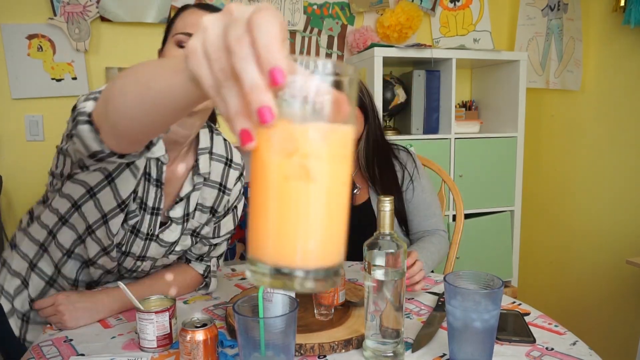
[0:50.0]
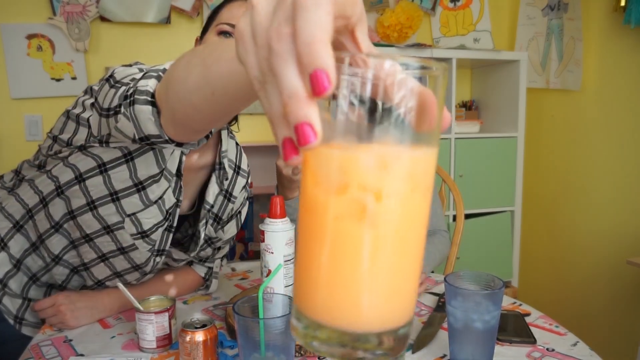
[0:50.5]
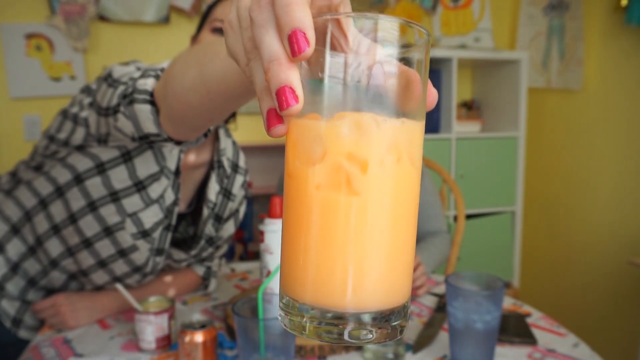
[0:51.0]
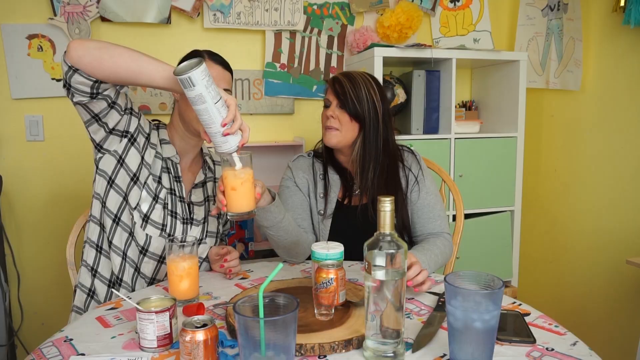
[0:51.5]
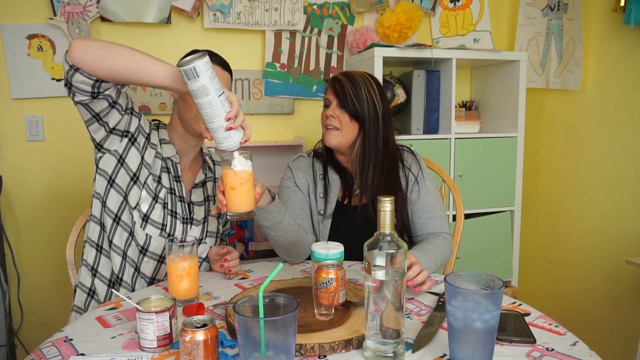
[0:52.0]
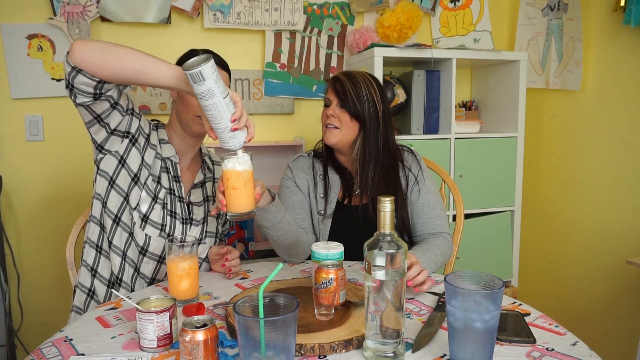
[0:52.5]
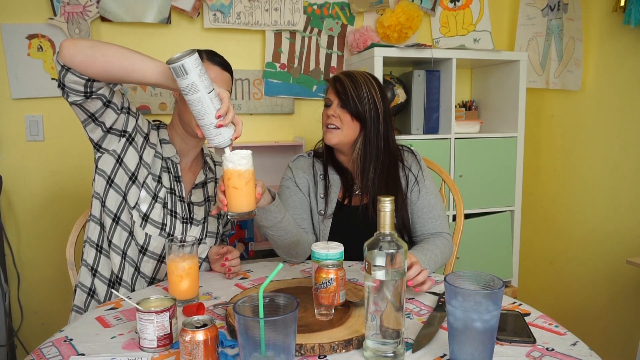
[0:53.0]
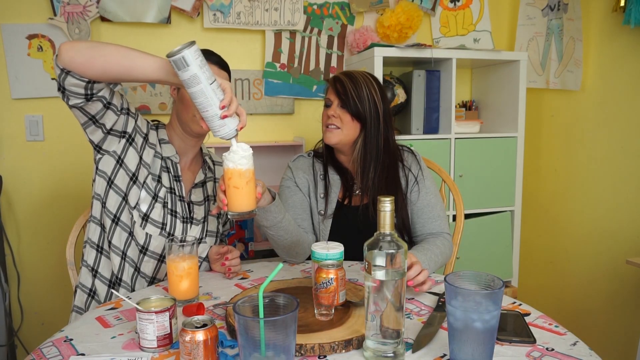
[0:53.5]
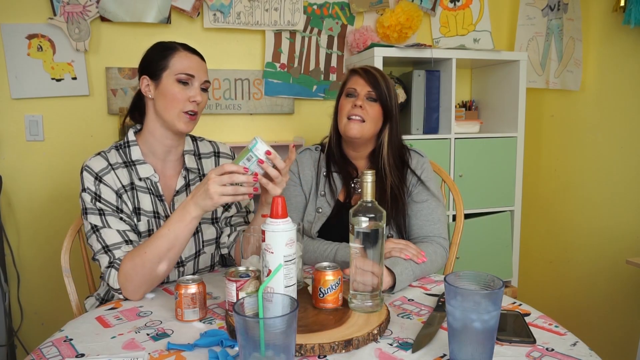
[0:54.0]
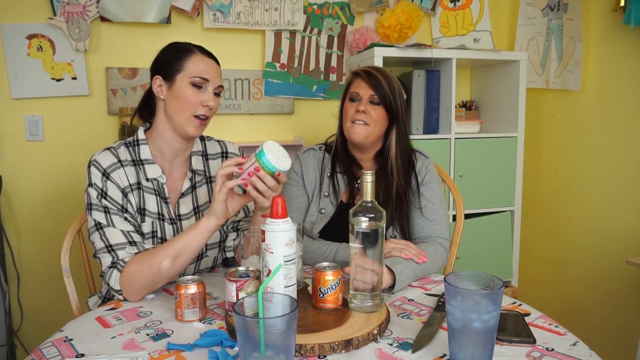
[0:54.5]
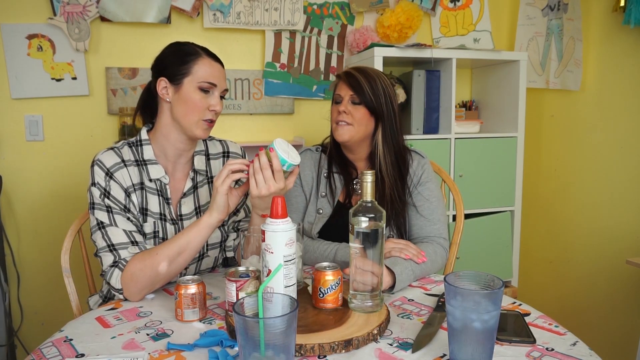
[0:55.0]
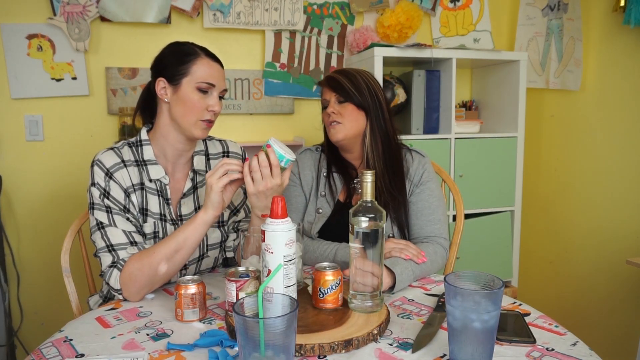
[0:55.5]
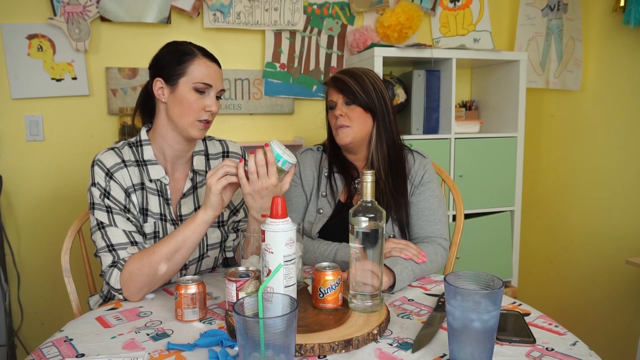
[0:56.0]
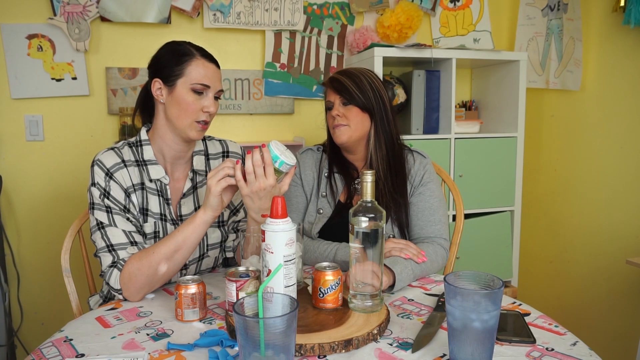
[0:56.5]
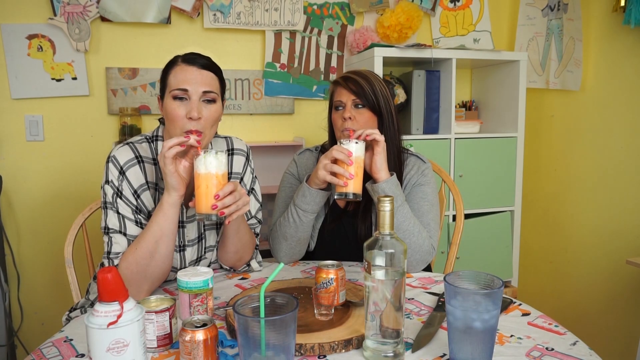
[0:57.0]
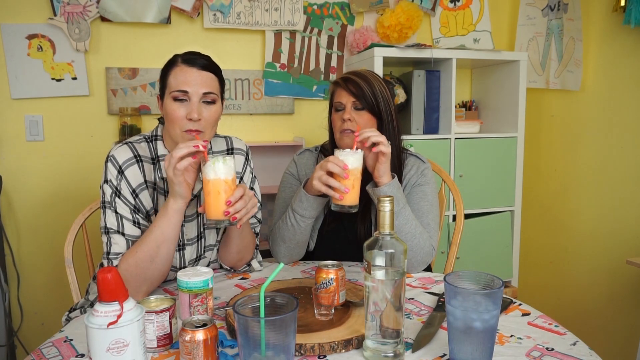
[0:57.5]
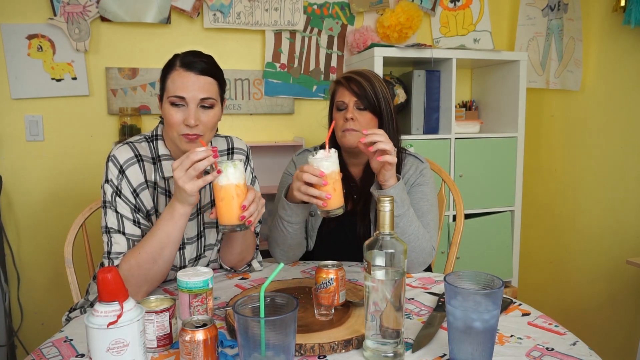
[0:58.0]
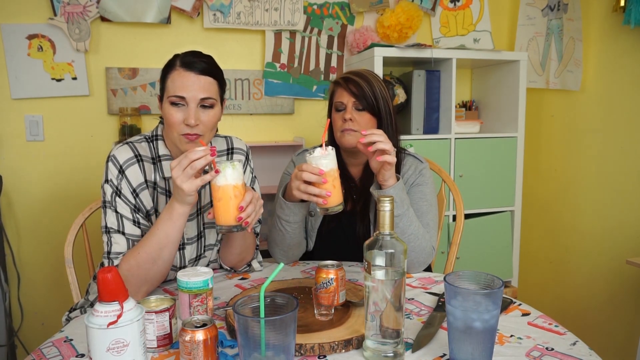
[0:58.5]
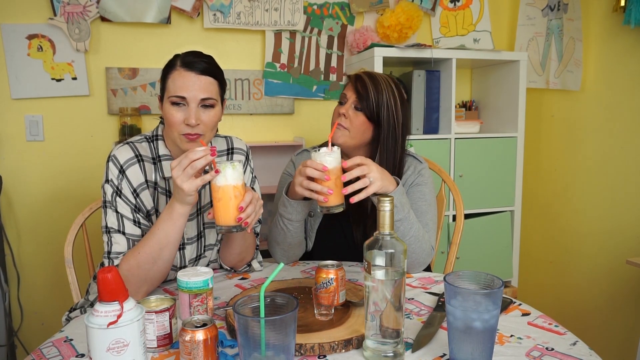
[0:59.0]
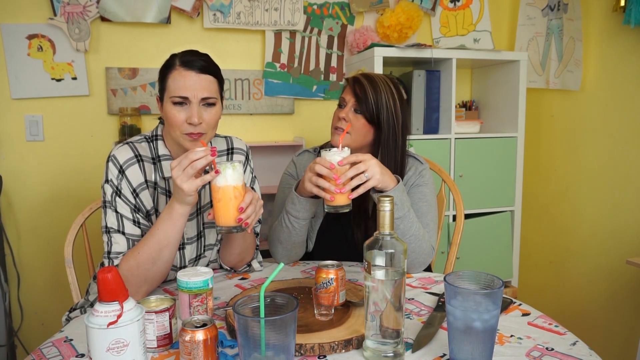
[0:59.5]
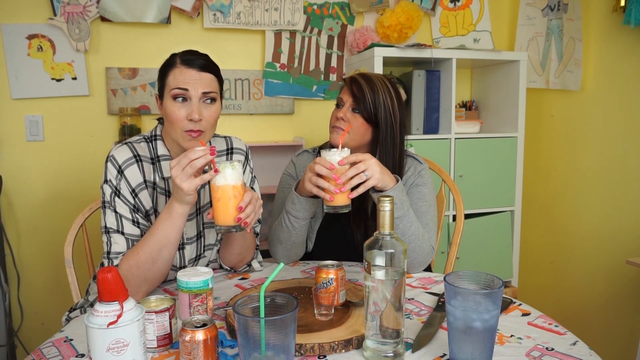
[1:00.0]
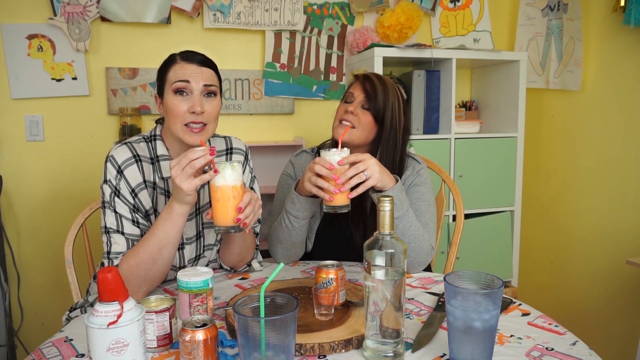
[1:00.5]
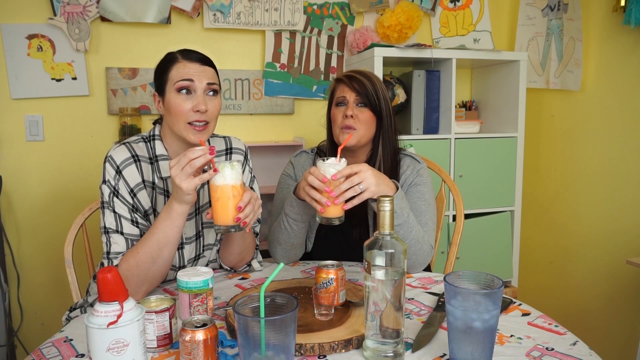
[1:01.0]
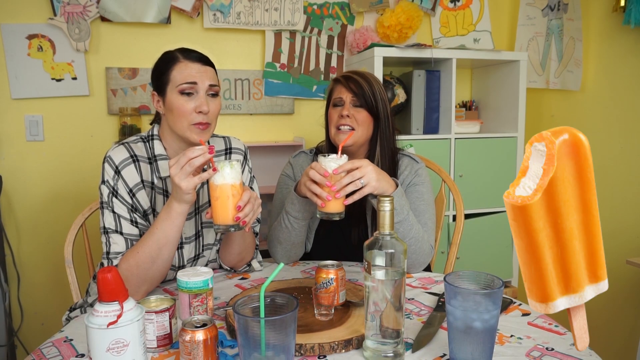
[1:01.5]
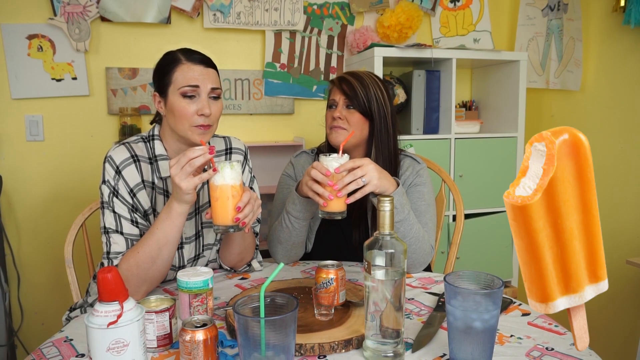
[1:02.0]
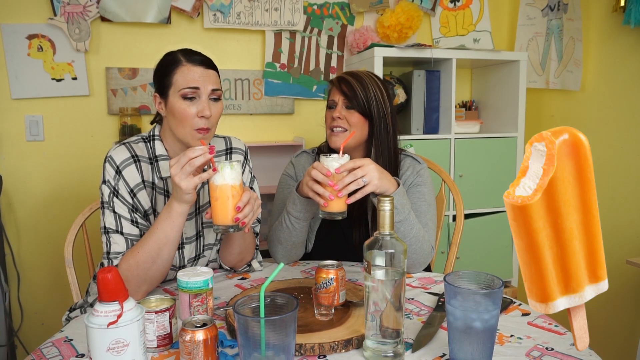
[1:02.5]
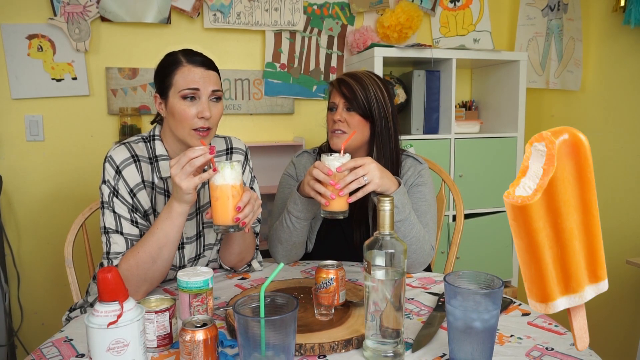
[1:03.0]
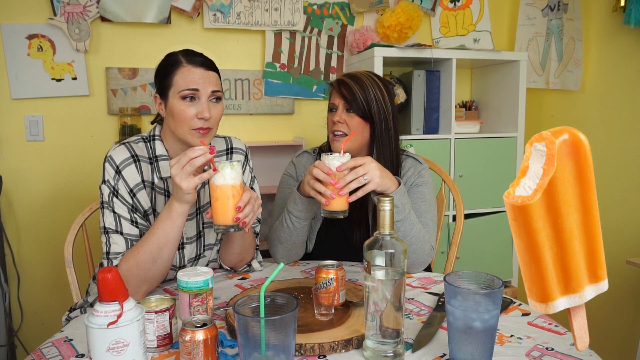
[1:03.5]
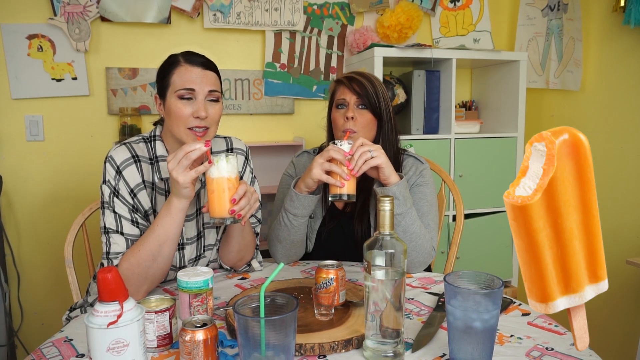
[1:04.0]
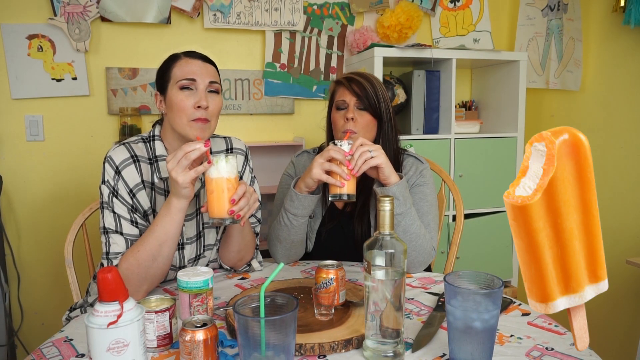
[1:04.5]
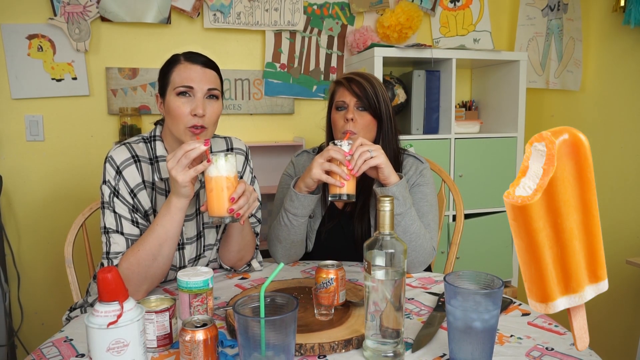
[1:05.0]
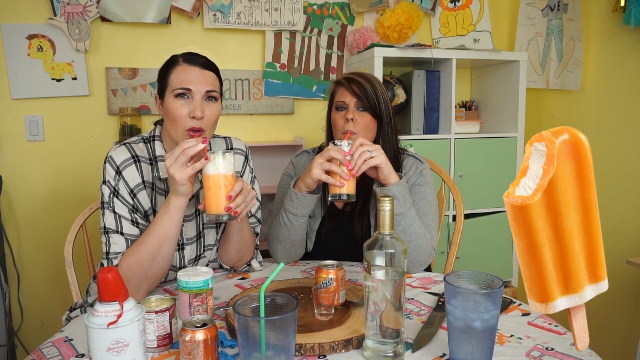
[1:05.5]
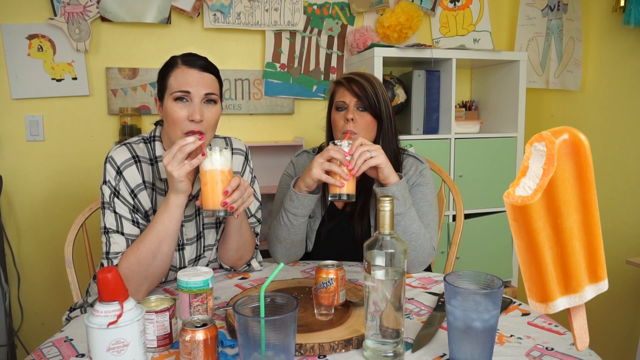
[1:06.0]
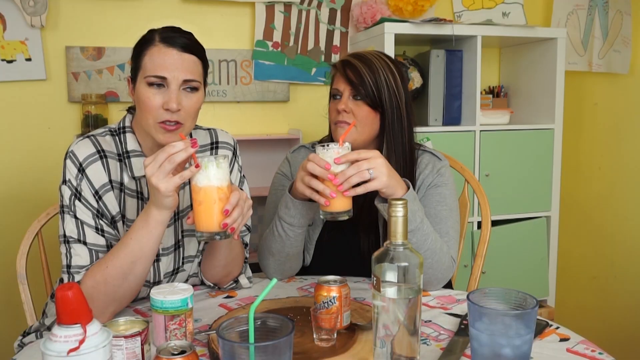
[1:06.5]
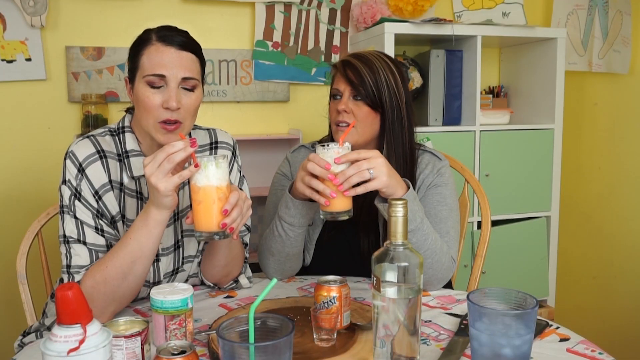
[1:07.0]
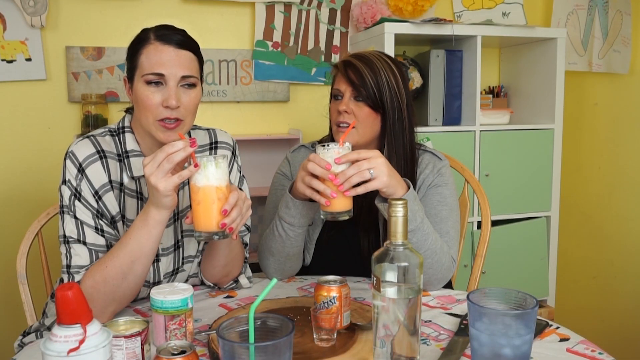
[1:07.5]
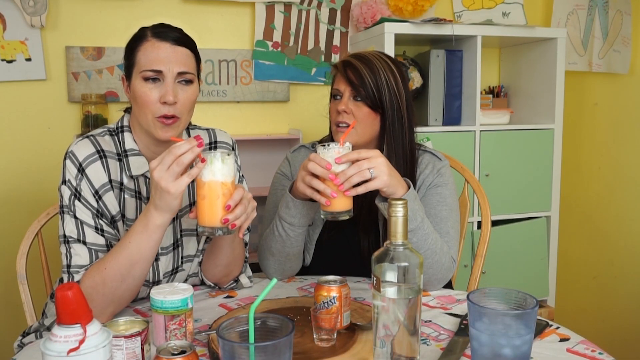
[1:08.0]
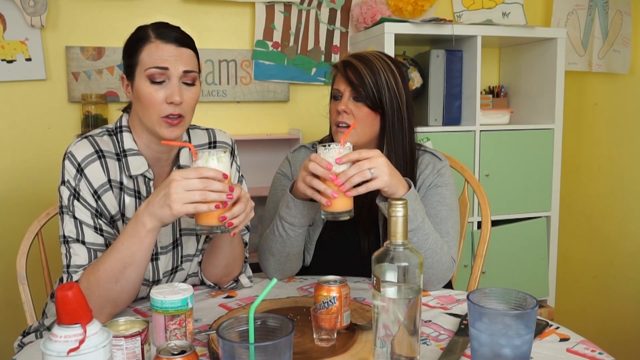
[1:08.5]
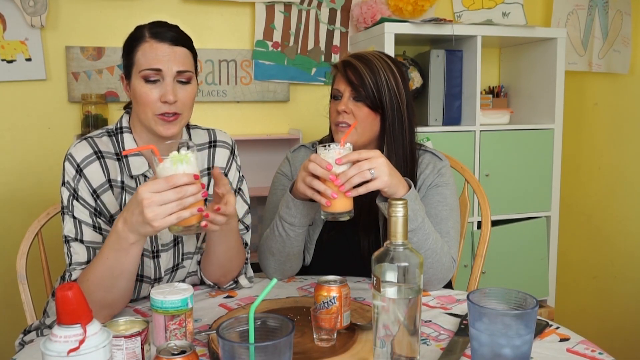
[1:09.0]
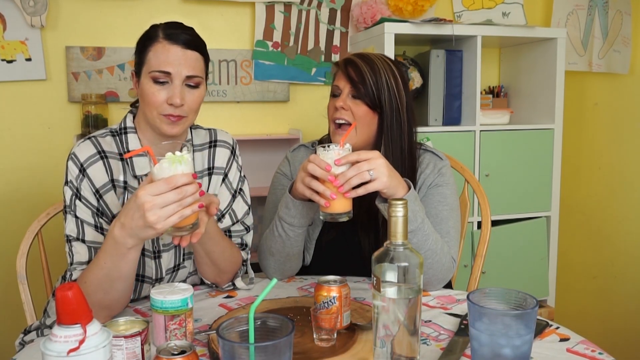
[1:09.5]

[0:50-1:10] The woman on the left shows the camera the glass after everything has been mixed; the contents are now a much lighter color after being mixed with the cake frosting, and there is still ice in the glass. The woman on the right holds up the glass for the woman on the left, who squirts whipped cream into it on top of the liquid, almost to the top. Both women then try the drink, which contains soda, ice cubes, Smirnoff and whipped cream. They look at each other and seem to nod in approval, as if the taste is not as bad as they expected. In the lower right corner, an illustration pops up, somewhat like a cartoon of an orange creamsicle with vanilla in the middle. Both women keep talking and seem to approve of the taste of the beverage.